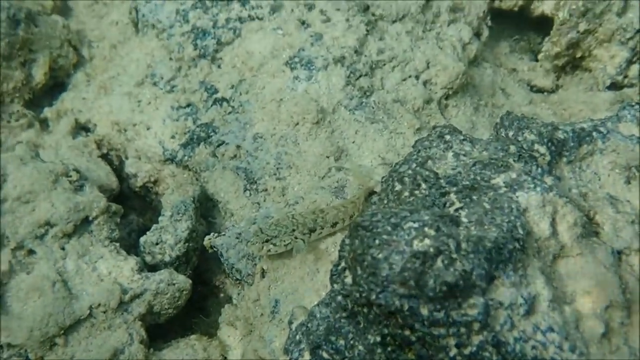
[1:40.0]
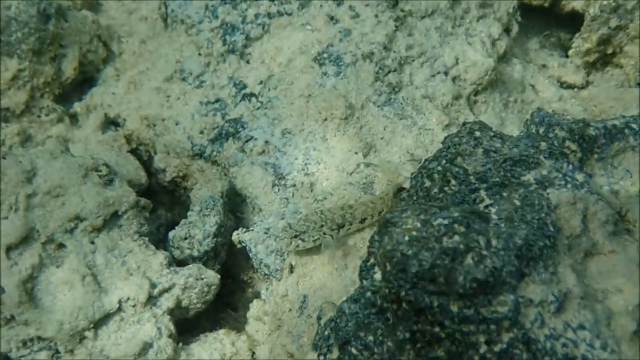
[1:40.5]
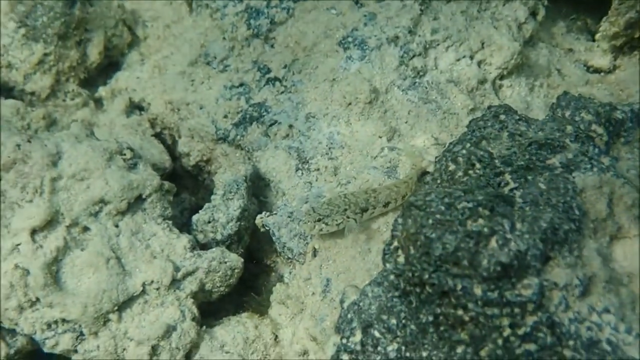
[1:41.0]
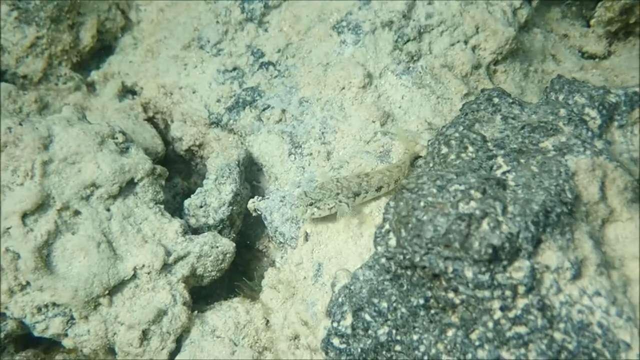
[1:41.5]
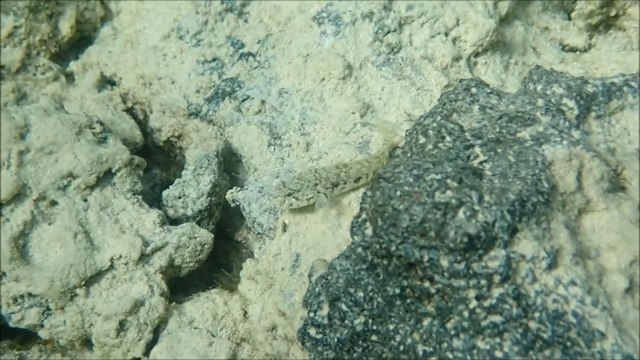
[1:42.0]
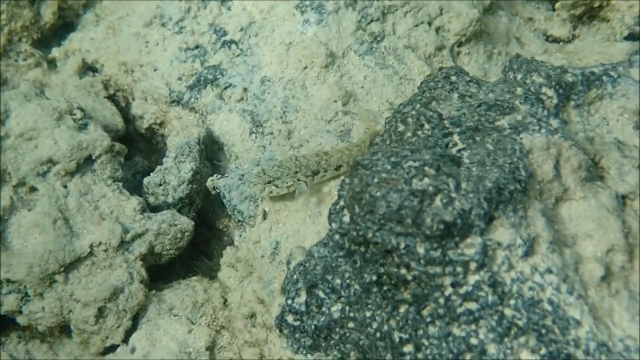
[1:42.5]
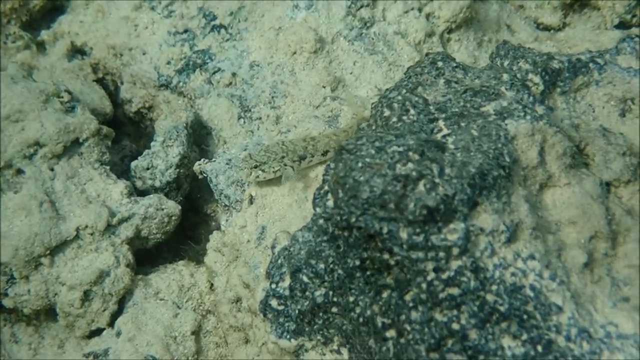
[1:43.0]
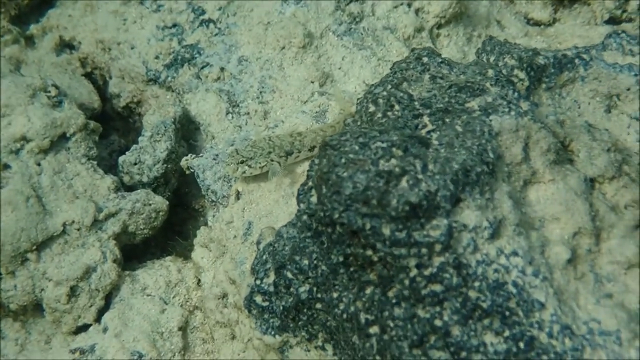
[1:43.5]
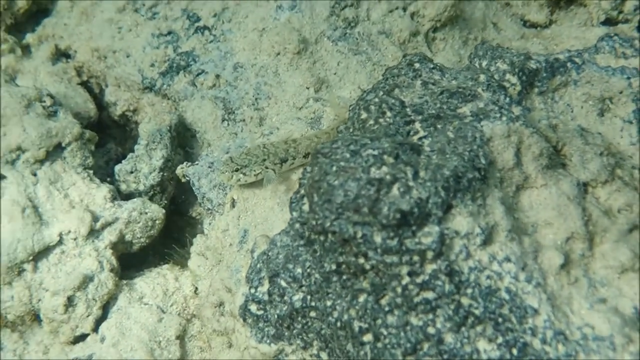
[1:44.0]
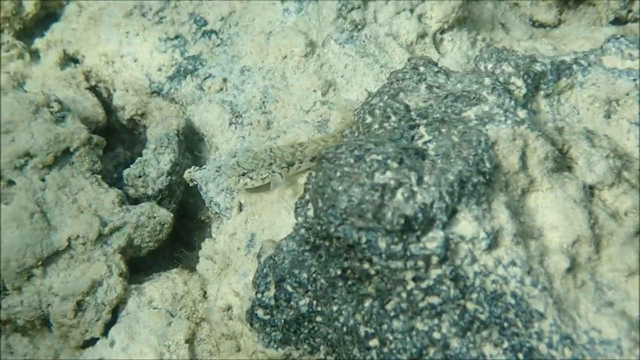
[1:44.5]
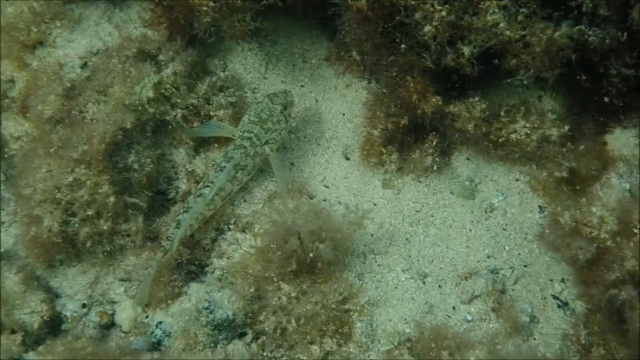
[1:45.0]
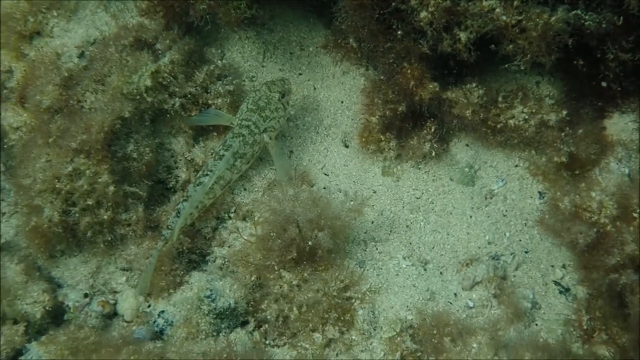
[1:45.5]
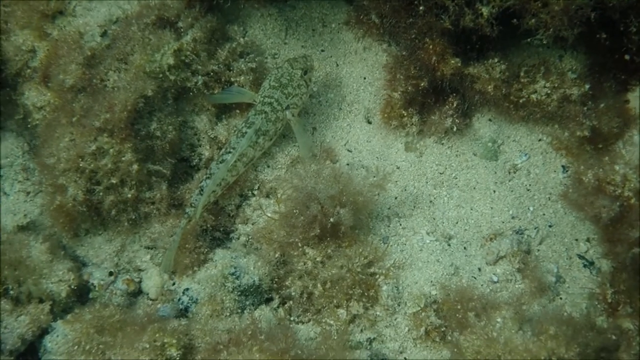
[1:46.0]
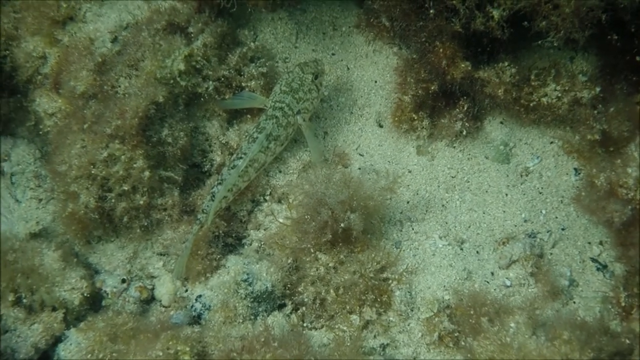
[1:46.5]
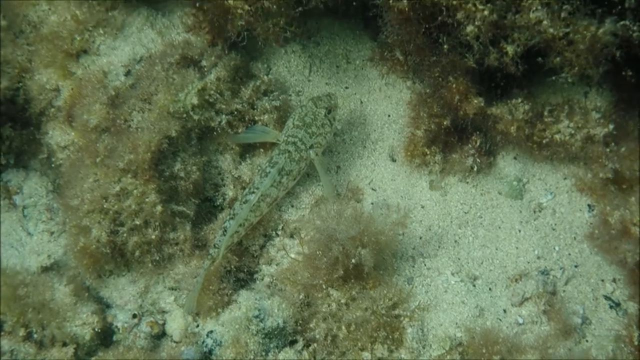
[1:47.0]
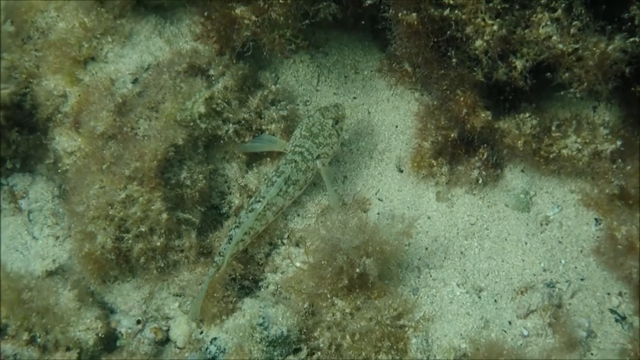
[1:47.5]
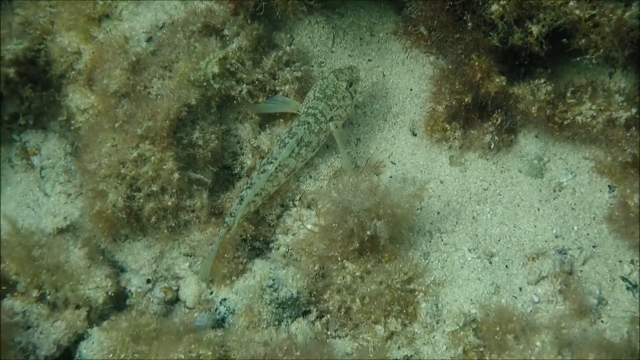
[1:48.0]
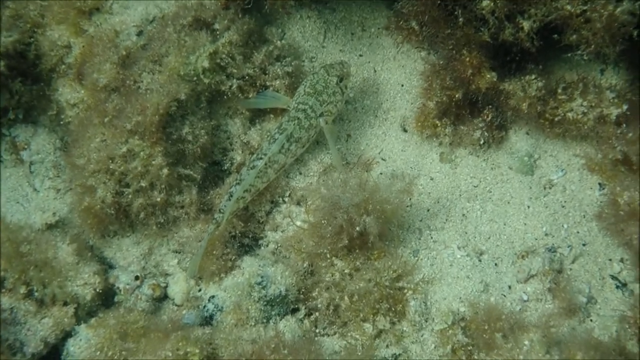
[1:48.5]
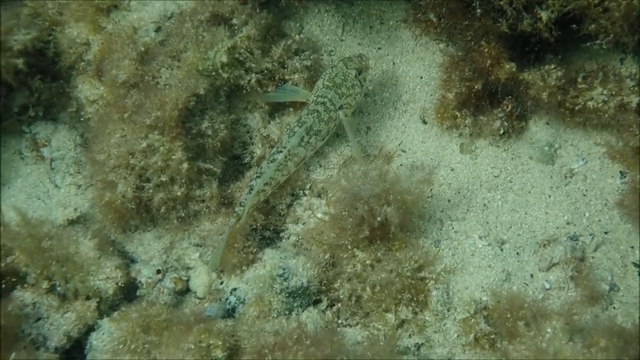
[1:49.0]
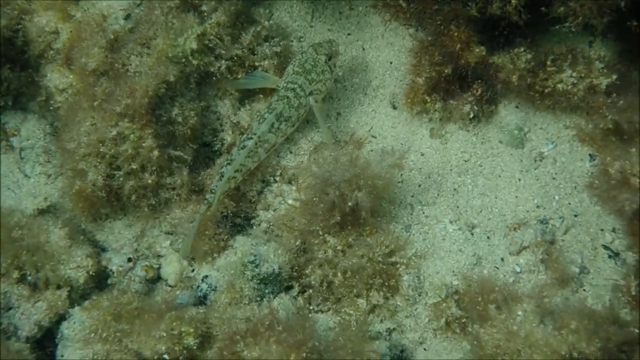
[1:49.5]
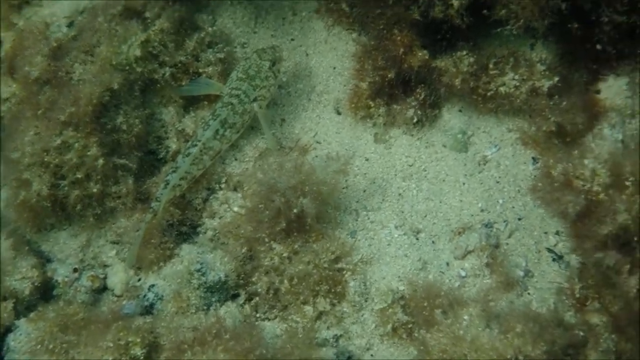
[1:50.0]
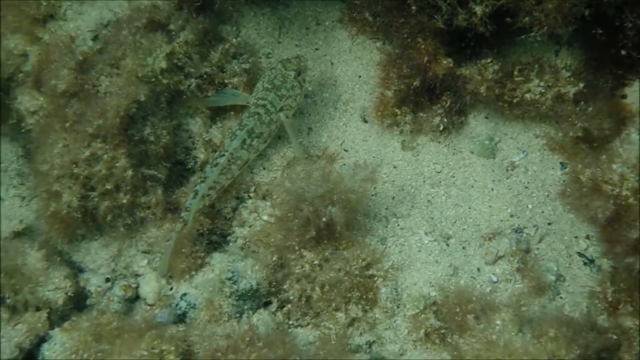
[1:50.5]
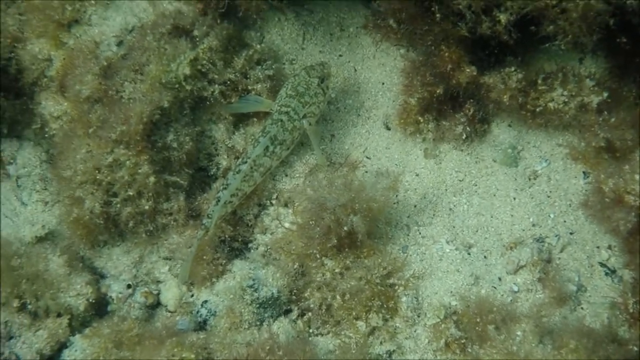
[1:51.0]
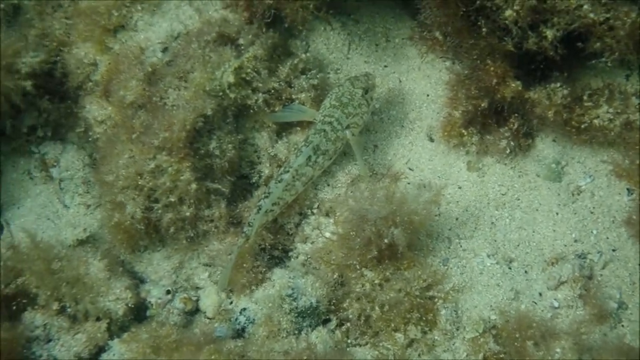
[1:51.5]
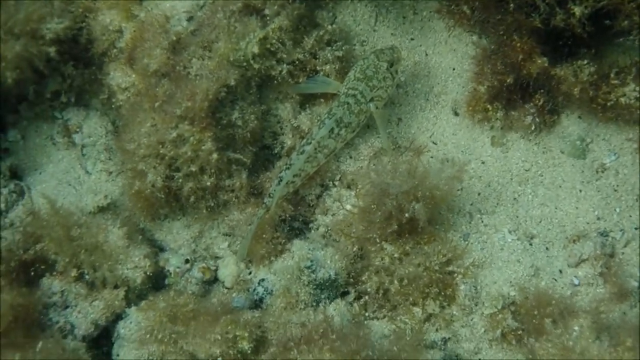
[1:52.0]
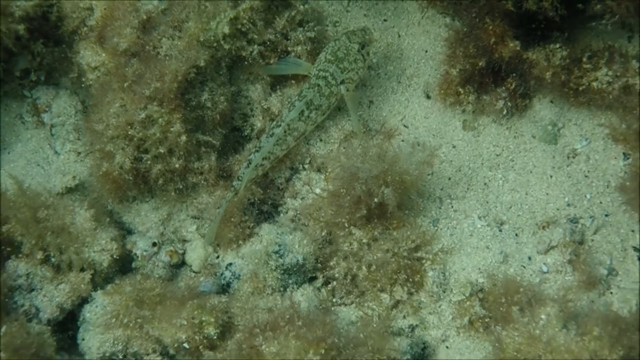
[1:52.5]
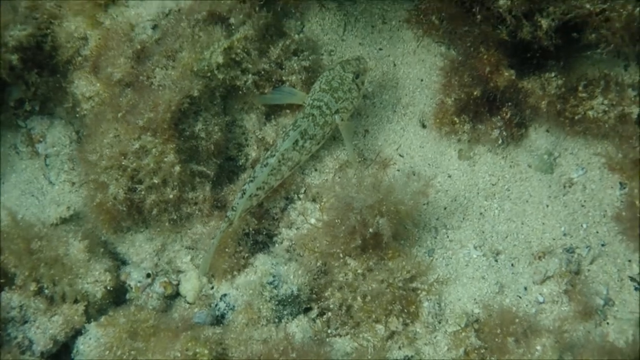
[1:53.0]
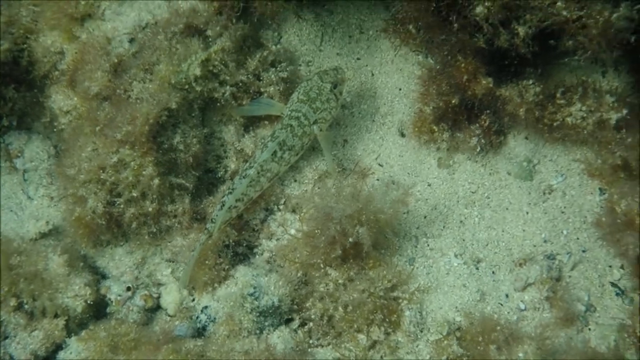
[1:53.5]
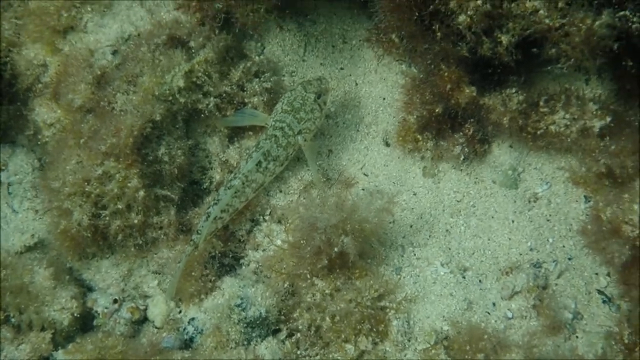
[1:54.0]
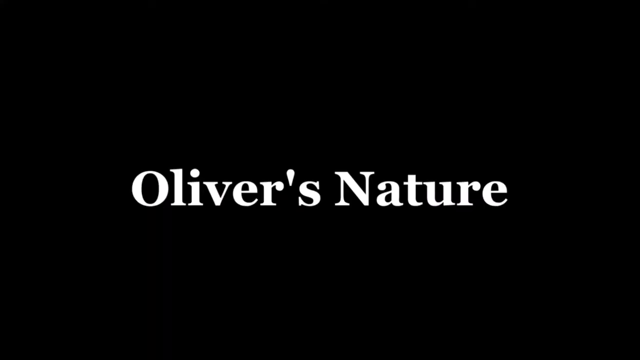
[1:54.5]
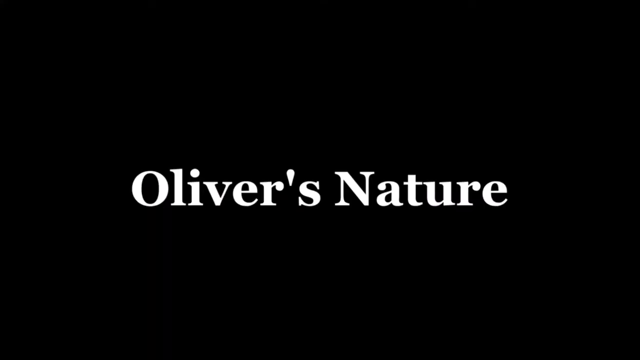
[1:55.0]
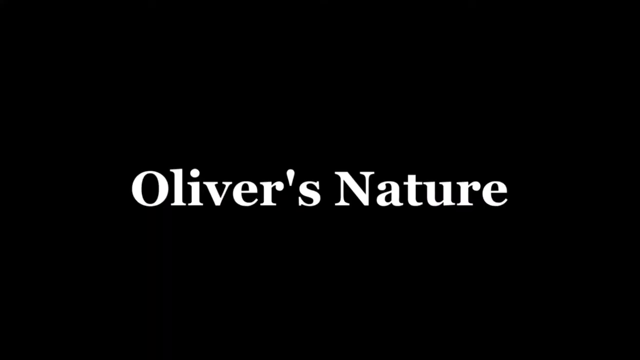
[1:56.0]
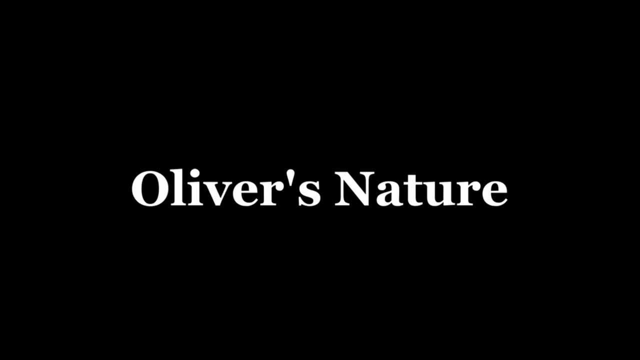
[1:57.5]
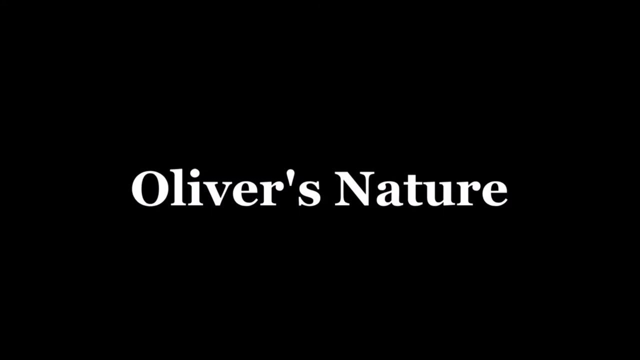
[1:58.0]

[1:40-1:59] The same fish is by the darker rock, hiding and camouflaging itself against the sand, and a few gaps in the sand are visible. The video transitions to another fish that can be seen a bit more clearly because it is surrounding some algae or kelp, greener or beiger in color, with a fuzzier, leafier texture and a darker green color, so the fish contrasts slightly more with it. The camera work is shakier, still focusing on the fish but moving back and forth, up and down, and side to side. This fish has a pointy tail, kind of a spike on top, and fins. It does not move at all, not even its tail, just lying where the algae is as if trying to camouflage itself. There are a few gray pebbles and rocks in the sand. The video ends on a black background with "Oliver's nature" in white, in something like a Roman numeral font.